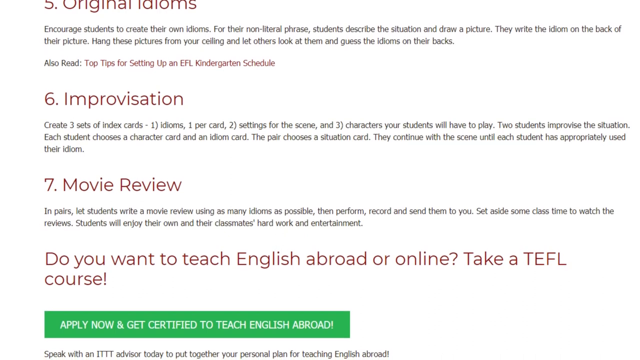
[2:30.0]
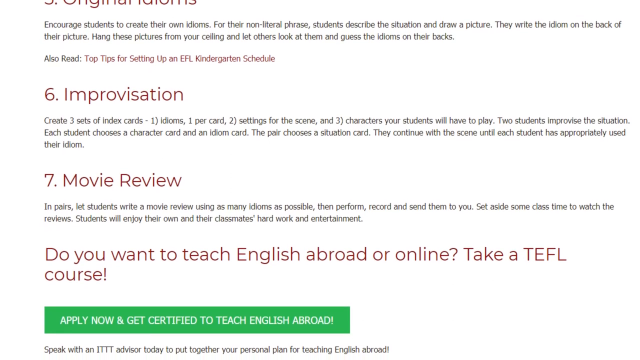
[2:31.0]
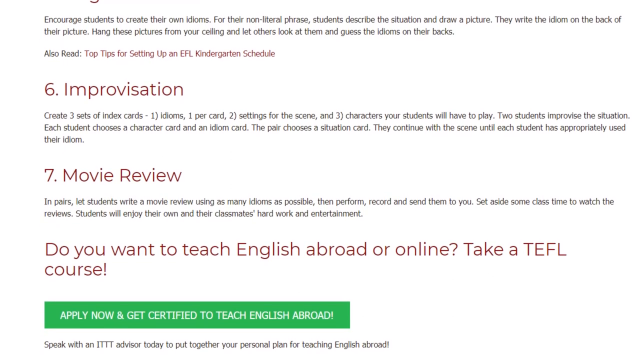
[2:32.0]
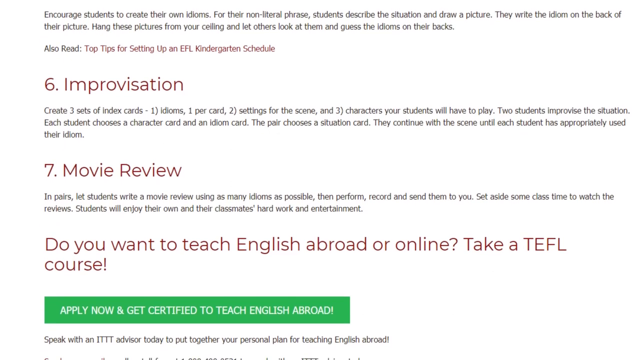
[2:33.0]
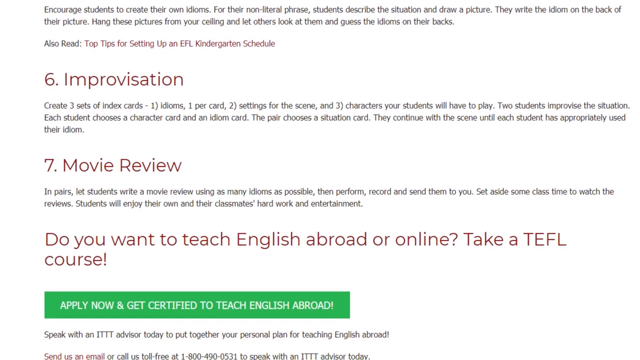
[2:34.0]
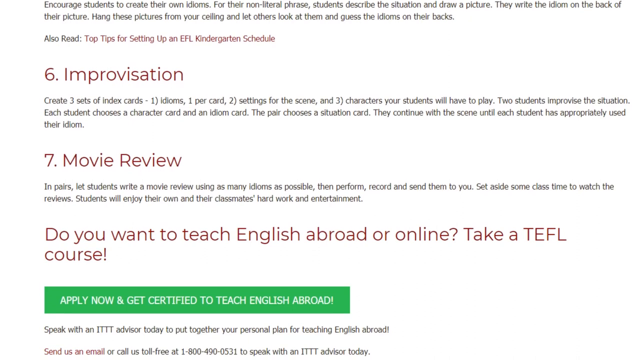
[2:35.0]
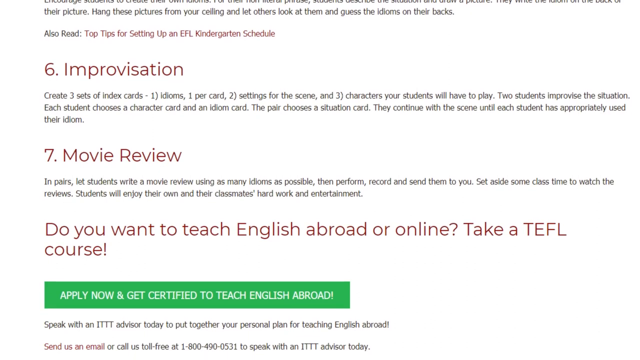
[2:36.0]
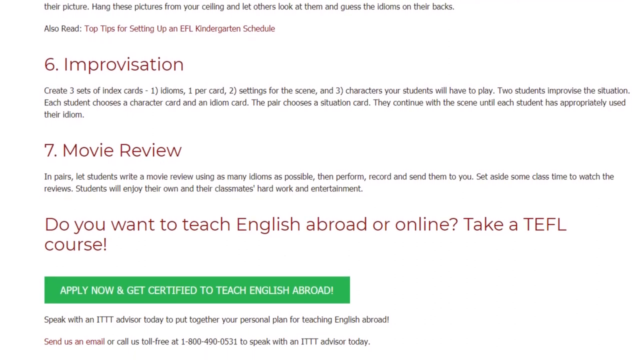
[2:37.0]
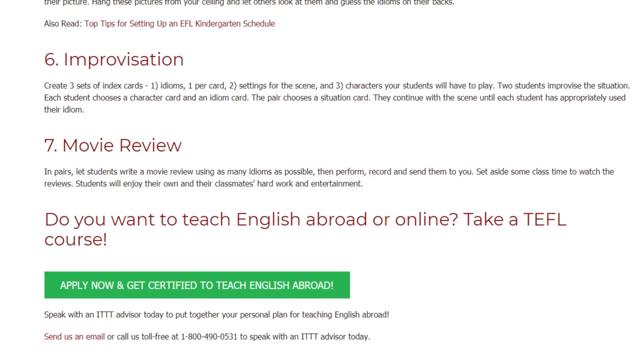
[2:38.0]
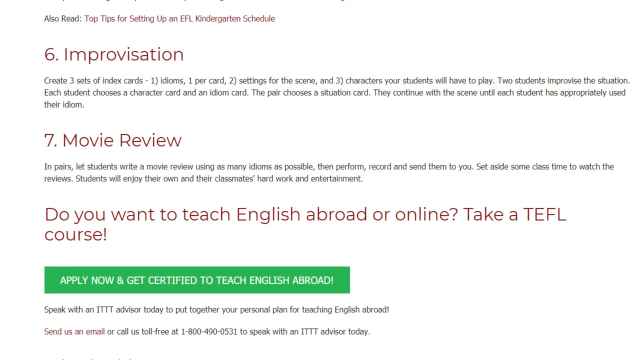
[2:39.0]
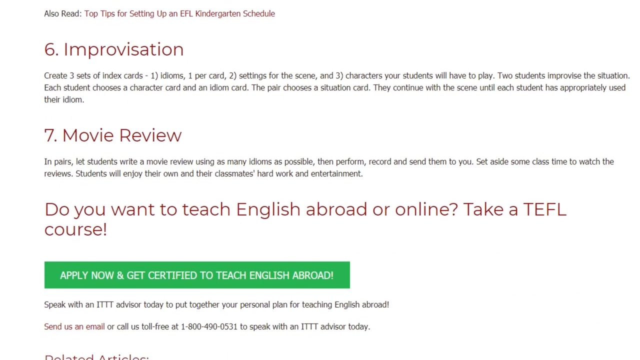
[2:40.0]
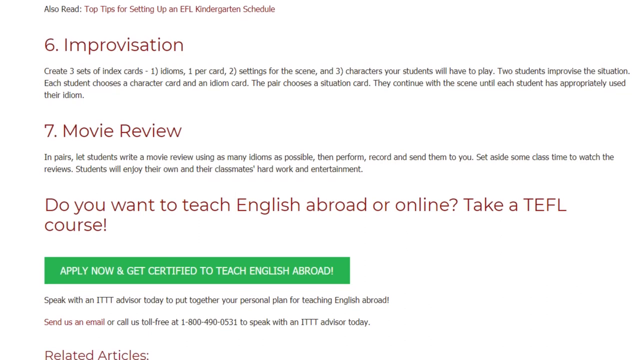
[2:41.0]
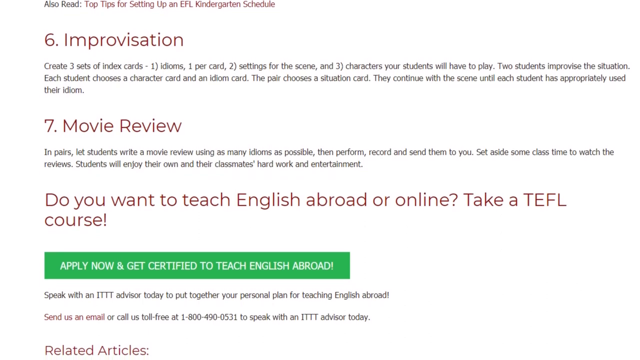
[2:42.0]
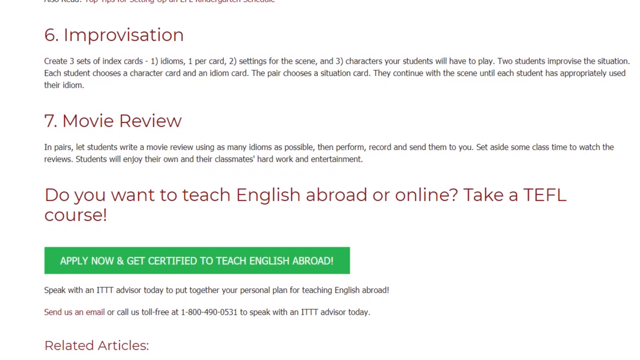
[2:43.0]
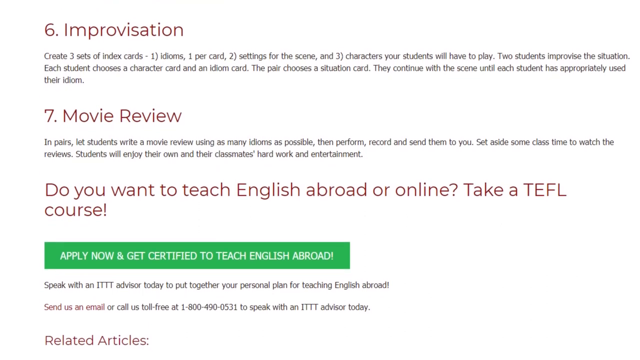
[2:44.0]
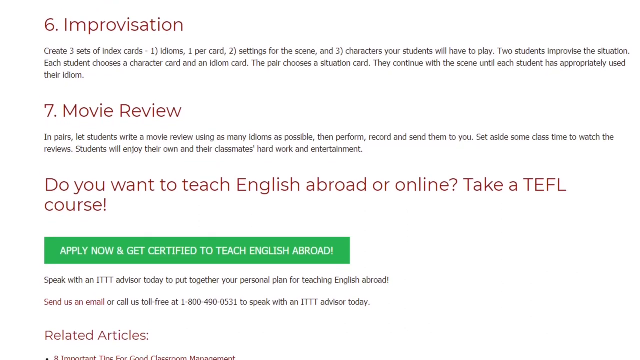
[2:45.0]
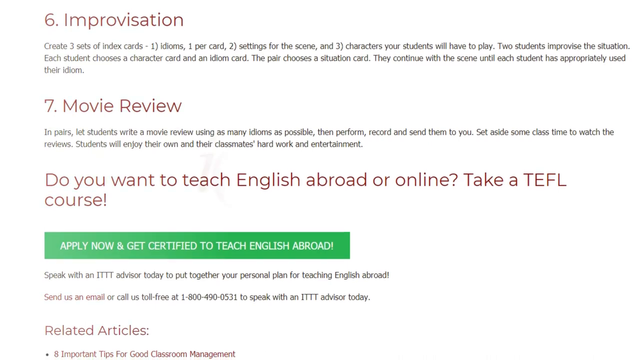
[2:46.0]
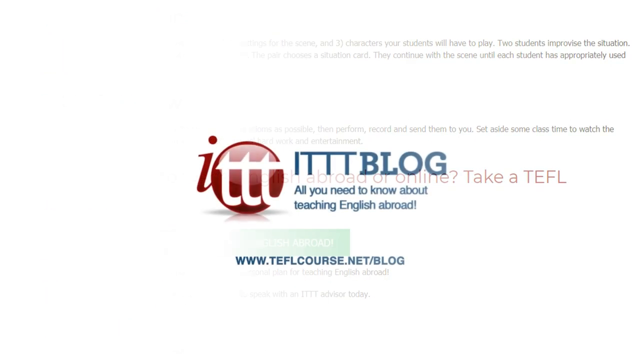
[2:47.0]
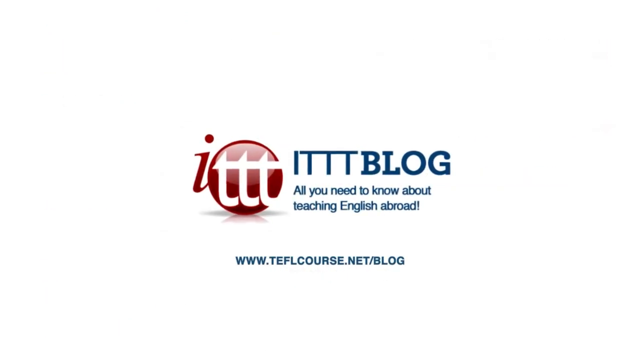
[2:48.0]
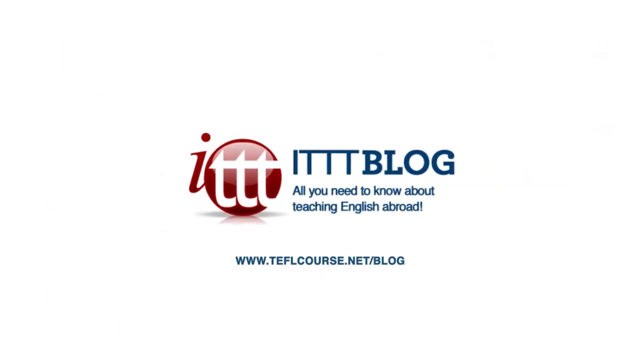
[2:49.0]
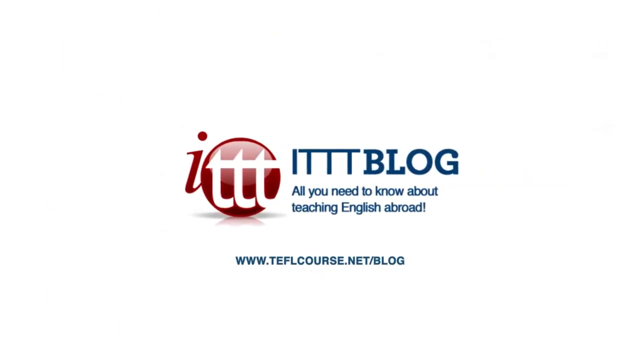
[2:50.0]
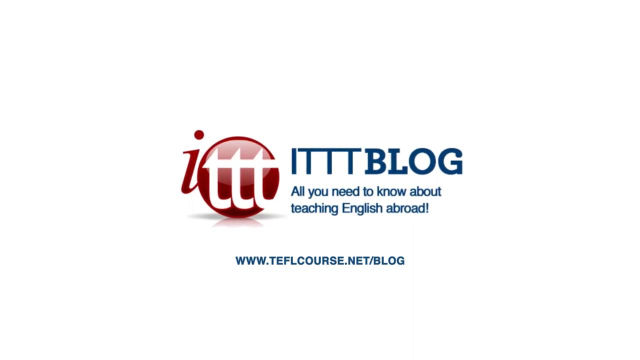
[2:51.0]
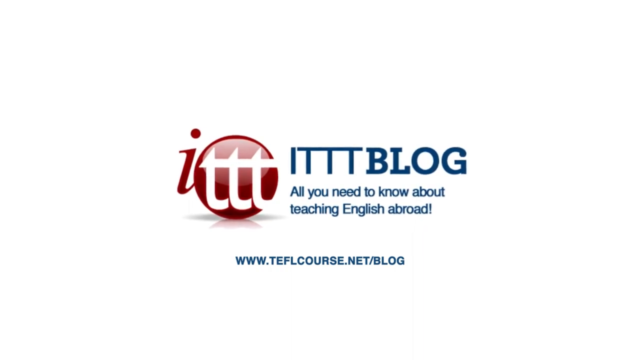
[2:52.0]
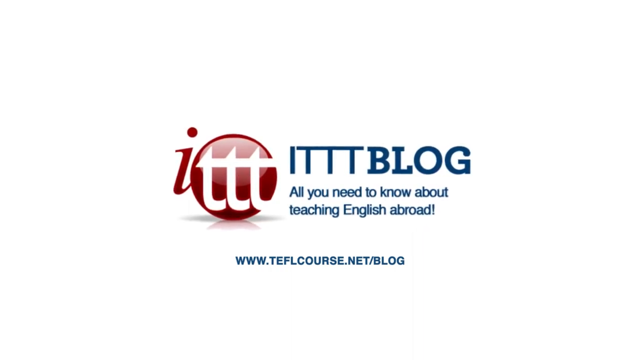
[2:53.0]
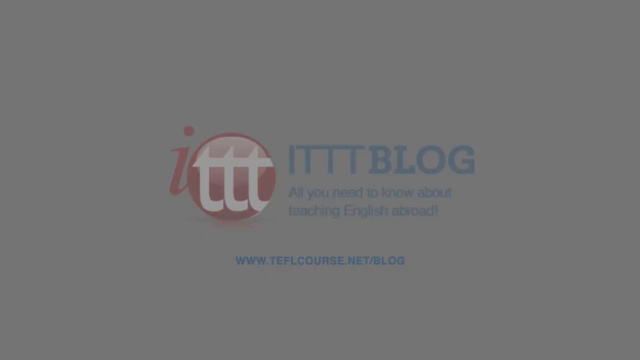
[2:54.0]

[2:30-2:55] The video, explaining to teachers how to teach idioms to international students, begins here with strategy number five, "original idioms," described below as: "Encourage students to write their own idioms for their non-literal phrase. Students describe the situation and draw a picture. They write the idiom on the back of their picture. Hang these pictures from your ceiling and let others look at them and guess the idioms on their backs." A hyperlink is below that. Number six is "improvisation," with the text: "Create three sets of index cards: 1) idioms one per card, 2) settings for the scene, and 3) characters your students will have to play. Two students improvise a situation. Each student chooses a character card and an idiom card. The pair chooses a situation card. They continue with the scene until each student has appropriately used their idiom." The seventh and final suggestion is "movie review": "In pairs let students write a movie review using as many idioms as possible then perform, record and send them to you. Set aside some class time to watch the reviews. Students will enjoy their own and their classmates hard work and entertainment." Below this, a question in red asks "Do you want to teach English abroad or online? Take a TEFL course." Below that is a clickable green rectangle that says "apply now and get certified to teach English abroad." At the end appears "ITTT blog, all you need to know about teaching English abroad," with the website below and the logo to the left.